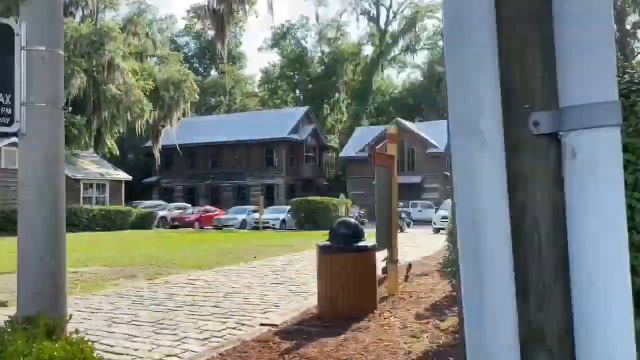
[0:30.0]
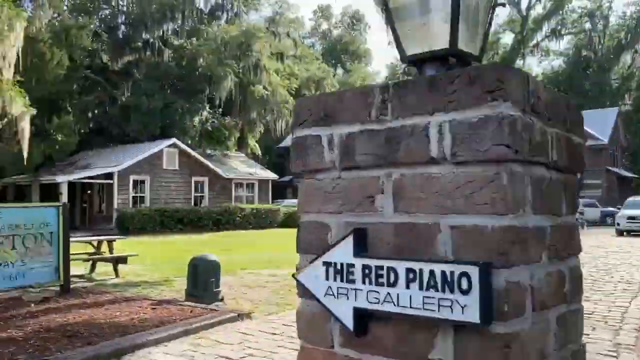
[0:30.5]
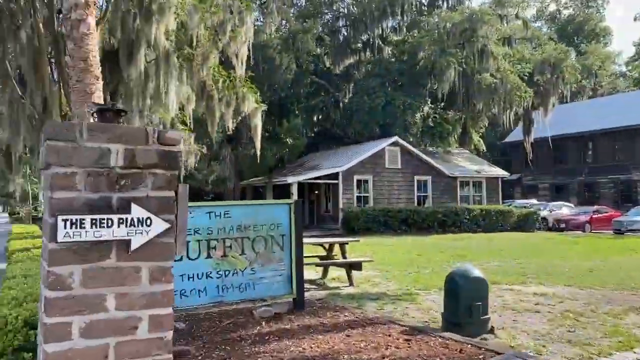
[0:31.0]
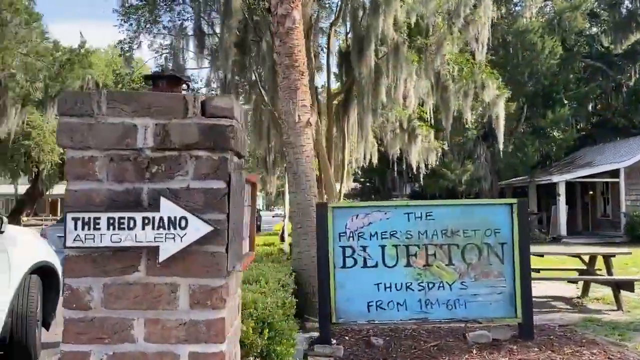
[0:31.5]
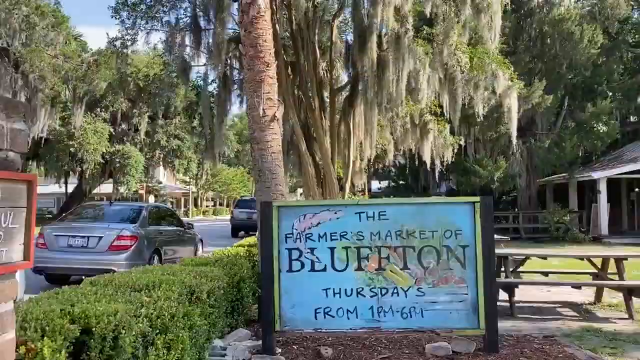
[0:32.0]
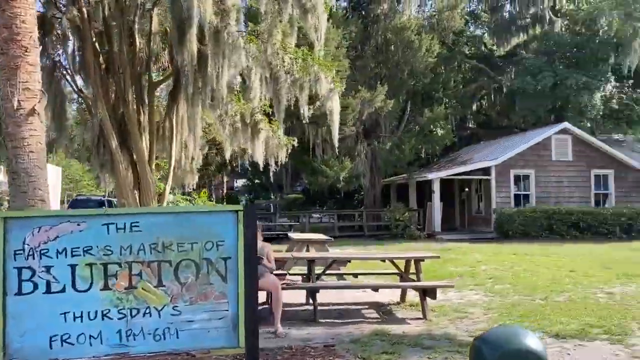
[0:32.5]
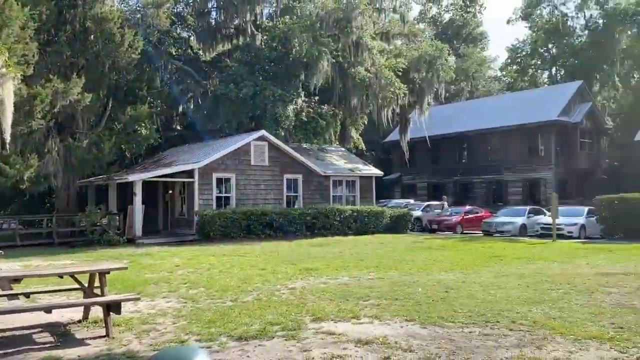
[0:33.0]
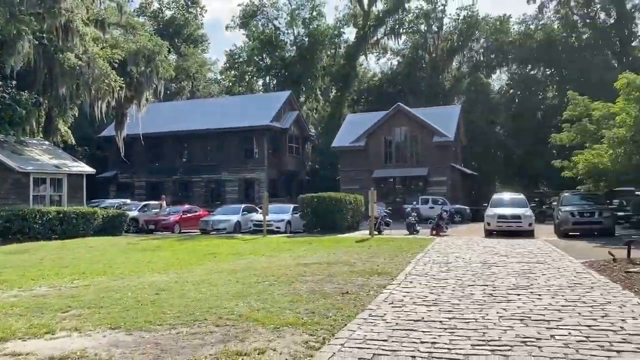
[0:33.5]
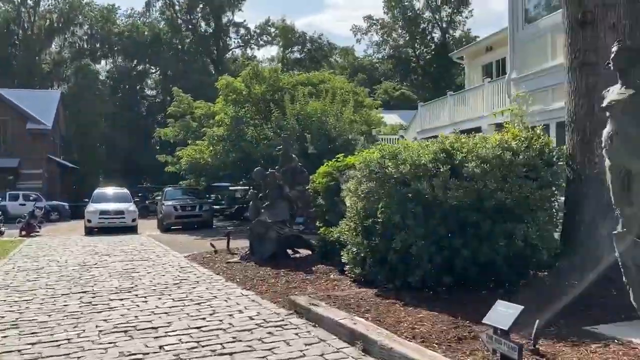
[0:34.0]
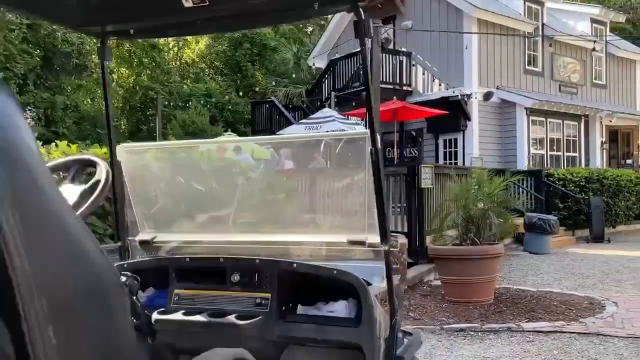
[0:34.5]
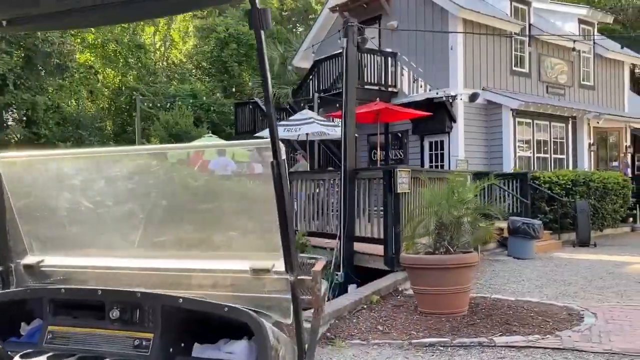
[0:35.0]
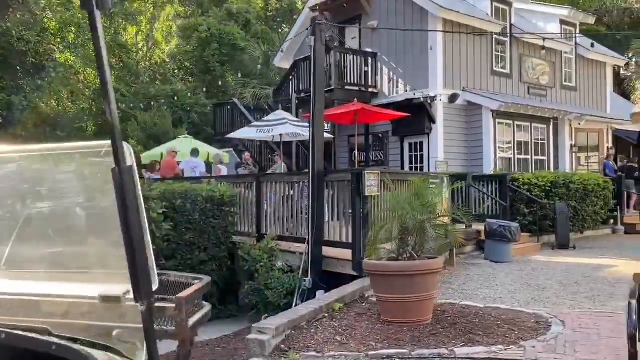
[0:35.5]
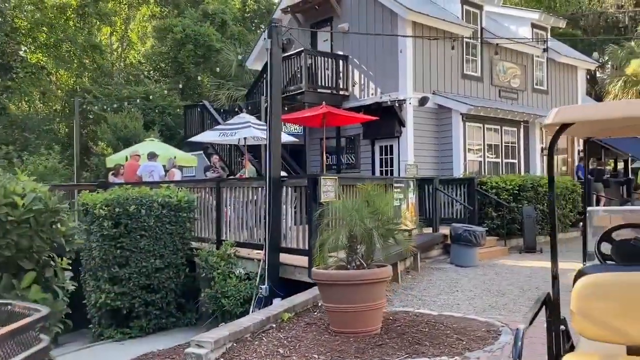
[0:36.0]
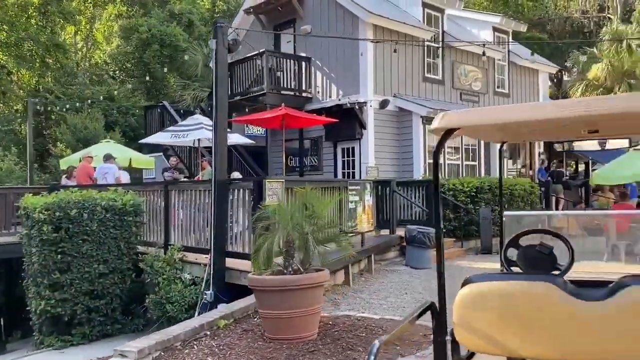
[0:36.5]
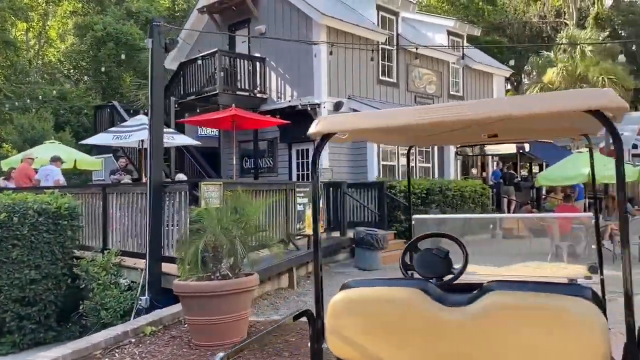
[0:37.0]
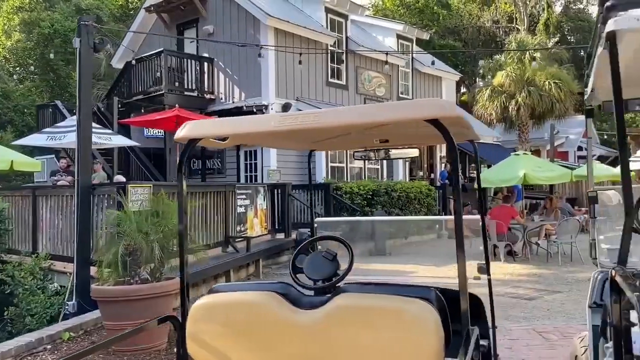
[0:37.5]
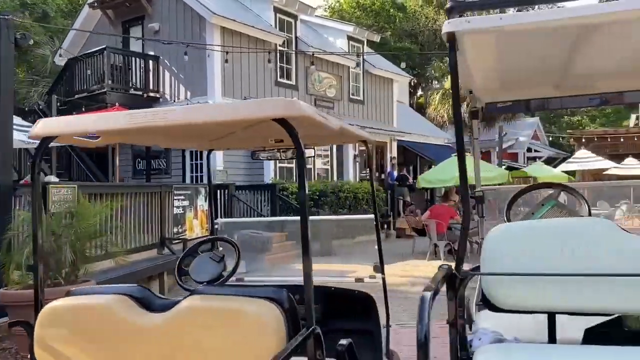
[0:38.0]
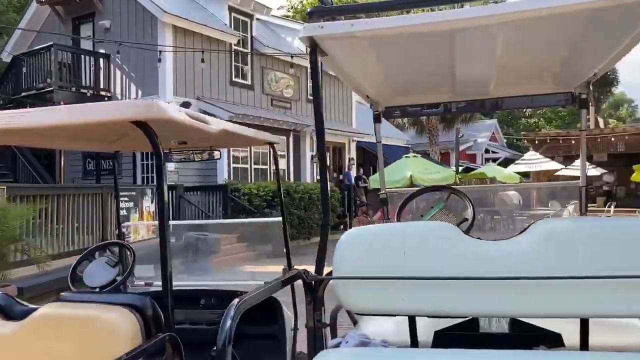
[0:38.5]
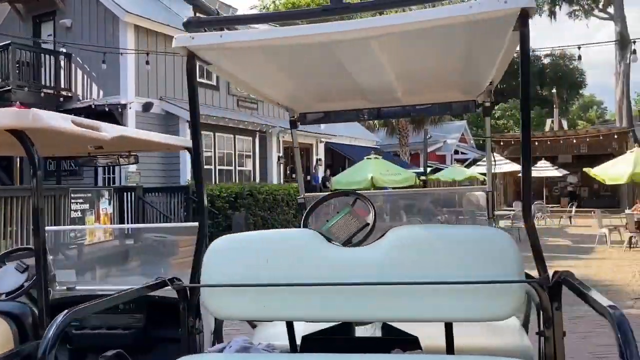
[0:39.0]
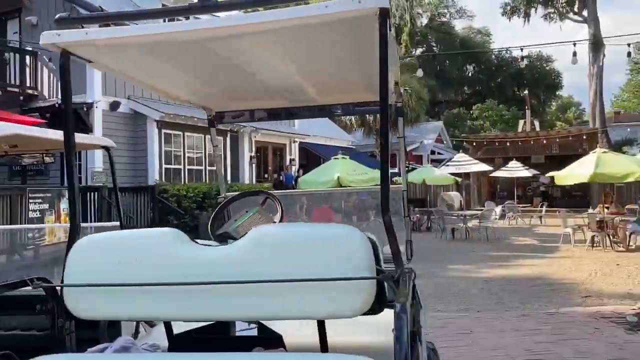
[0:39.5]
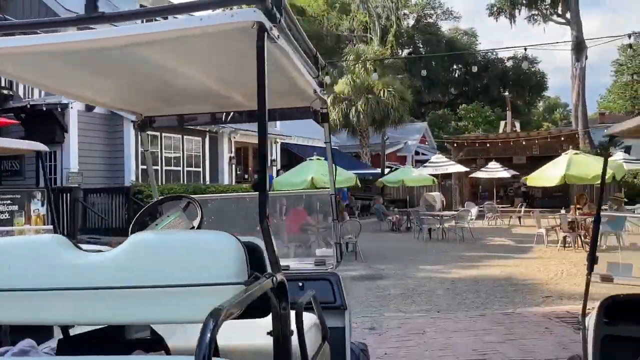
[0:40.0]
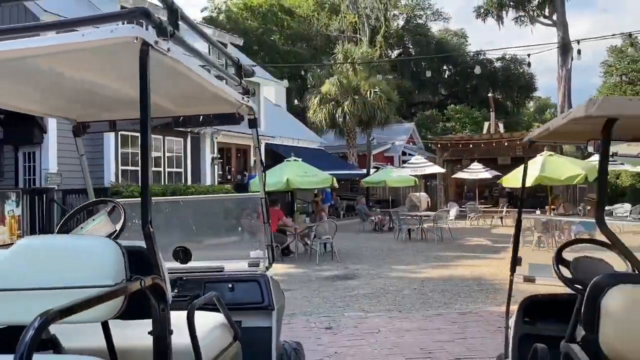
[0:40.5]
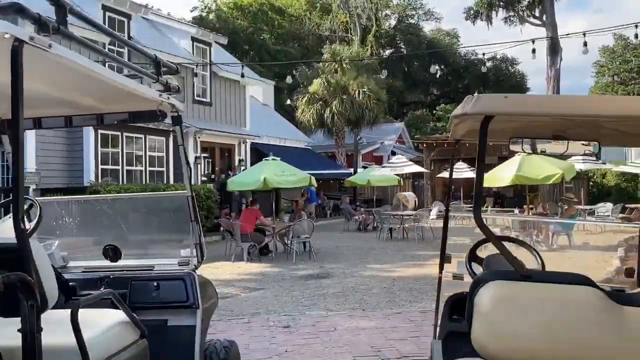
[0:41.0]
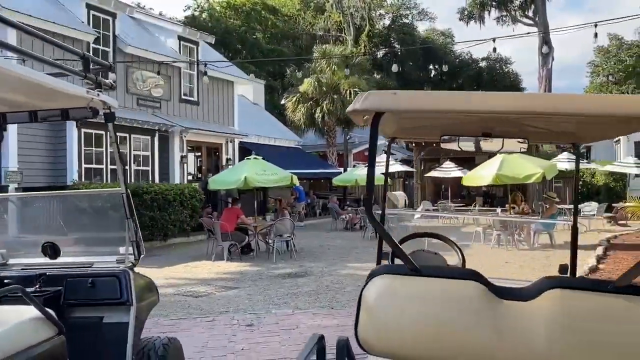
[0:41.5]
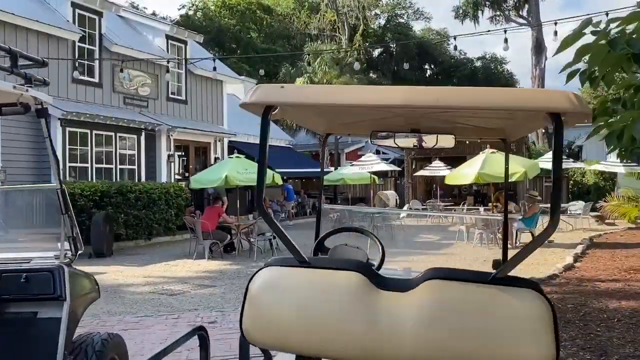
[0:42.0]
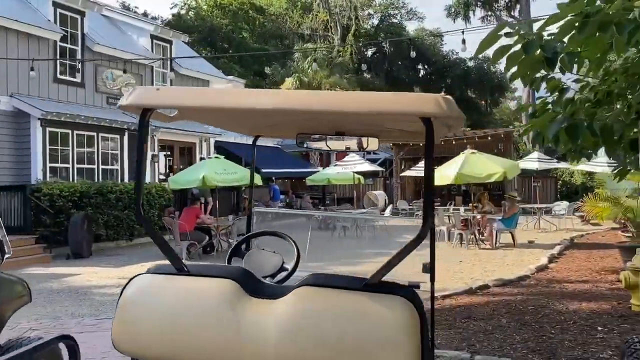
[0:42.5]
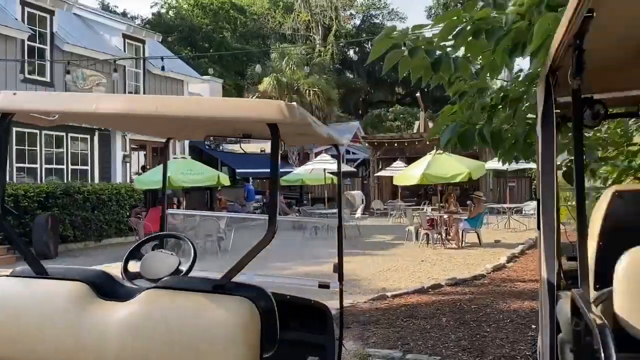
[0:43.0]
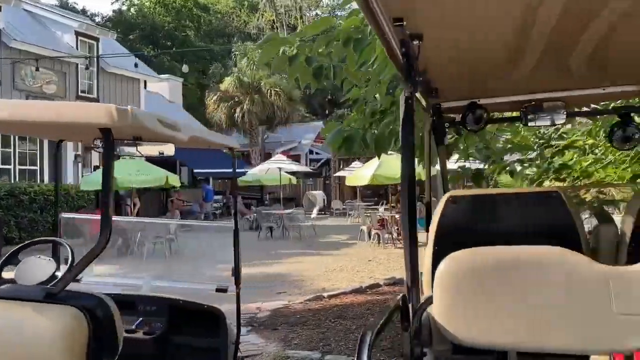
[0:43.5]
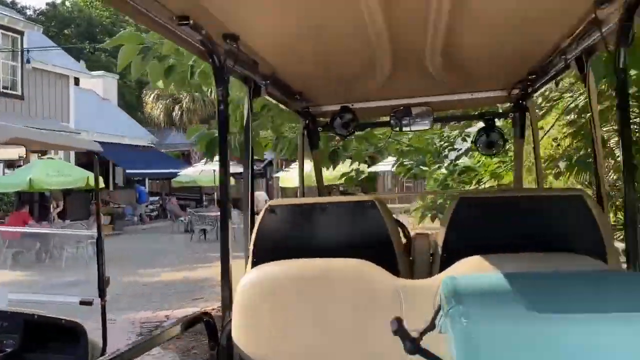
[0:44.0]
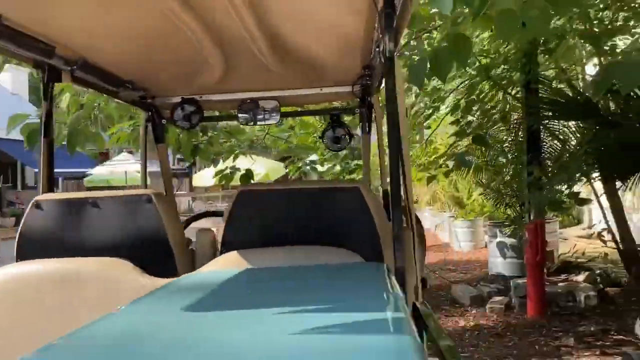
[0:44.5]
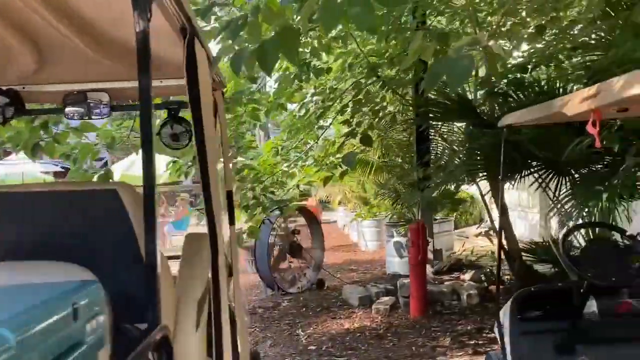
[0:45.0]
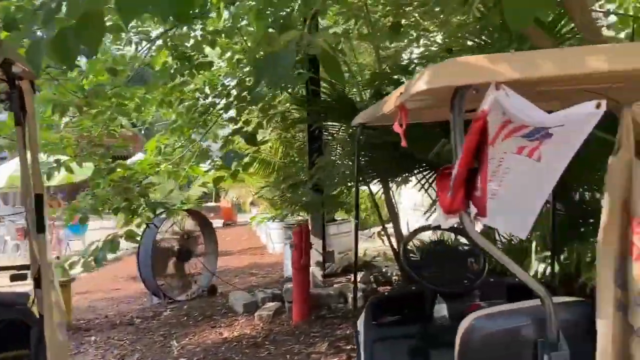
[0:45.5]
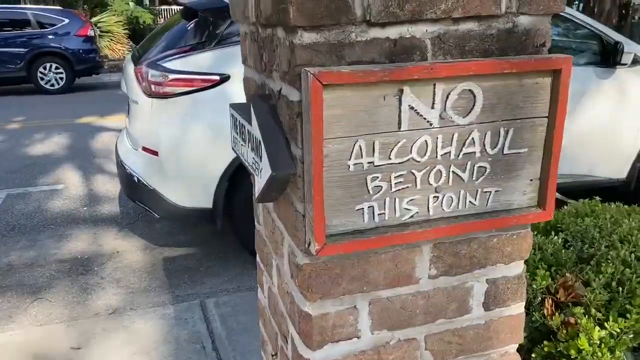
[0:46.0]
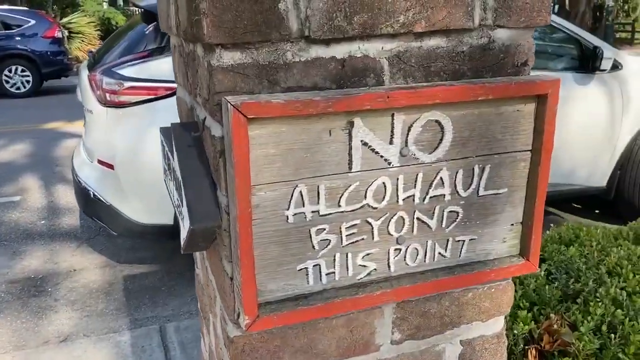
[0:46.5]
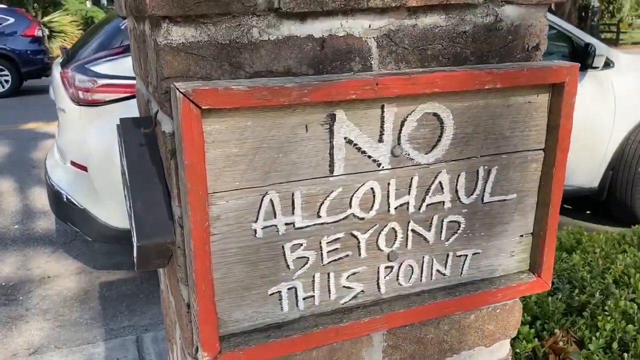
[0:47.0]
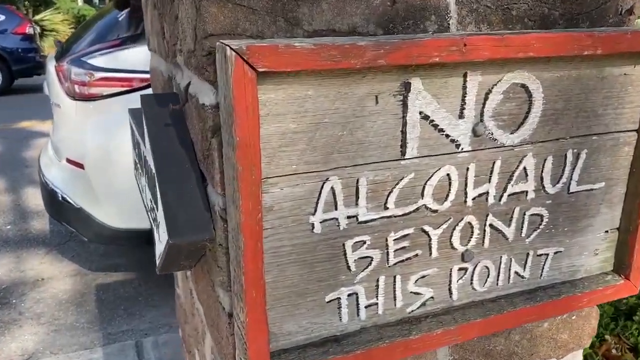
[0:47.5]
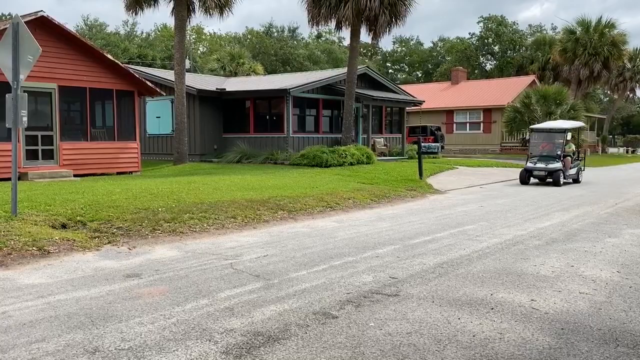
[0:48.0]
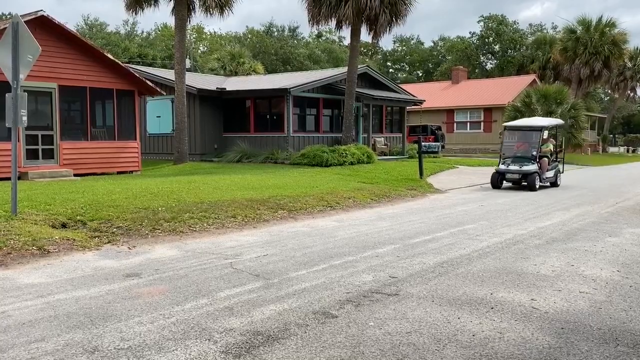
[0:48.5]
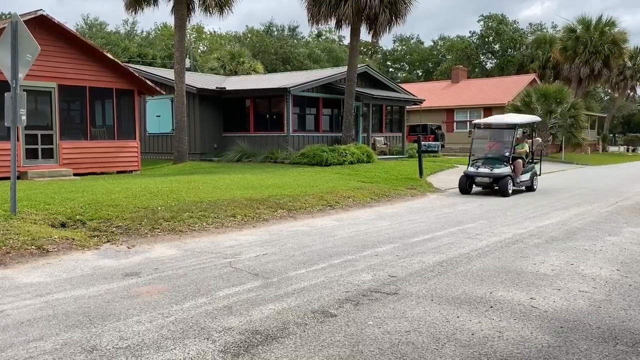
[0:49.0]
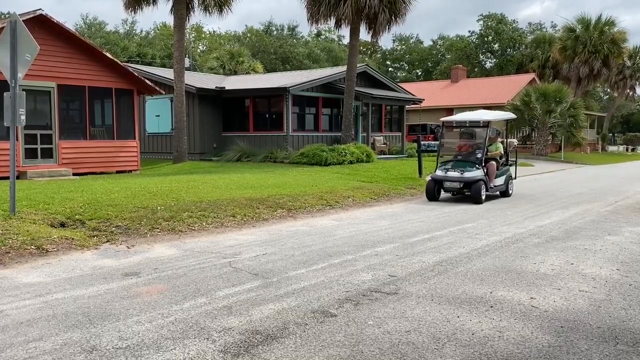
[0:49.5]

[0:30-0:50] The camera is moving, apparently on some type of vehicle, outside apartments. It moves to the left to the entry of the apartment, then pans over to the right, where different buildings come into view. A view of golf carts follows; the camera is probably walking at this point, panning to the right. Multiple golf carts are parked, and the camera does kind of a slow pan down each of them while the person filming walks by. The camera is then taken over to a brick post with a sign that says "no alcohol beyond this point," with alcohol spelled incorrectly on the sign. The camera zooms kind of away from that, and then there is a city street with bungalow houses with palm trees next to them. A golf cart drives down the road and starts to turn, as if turning in towards the camera.